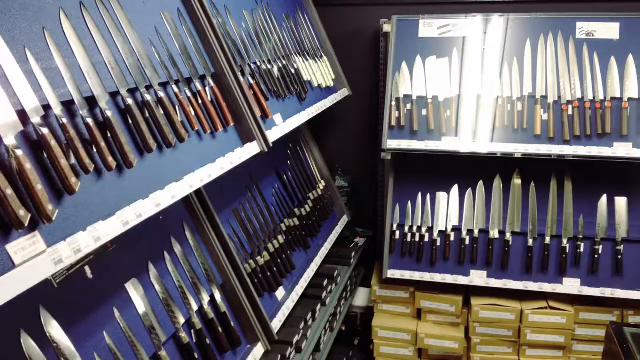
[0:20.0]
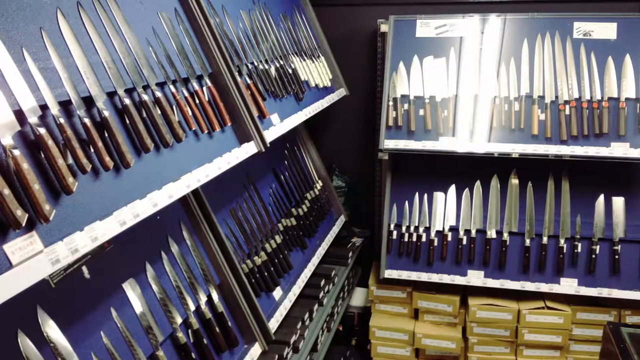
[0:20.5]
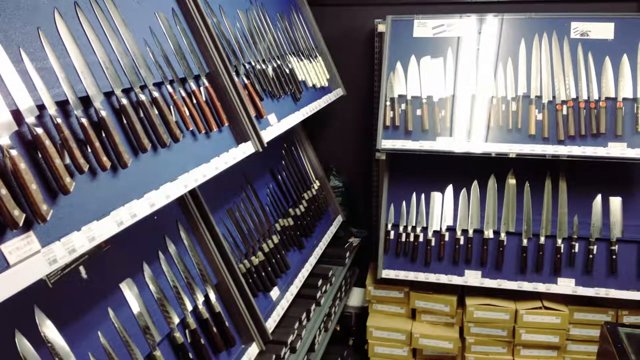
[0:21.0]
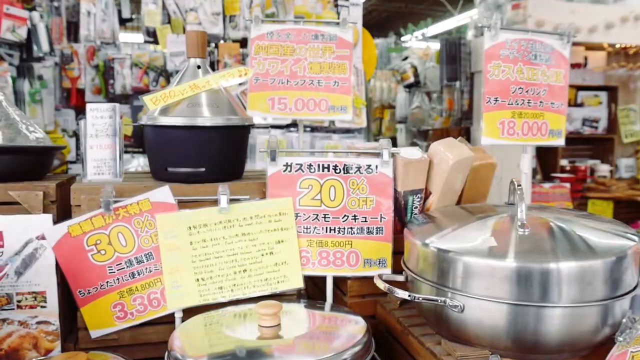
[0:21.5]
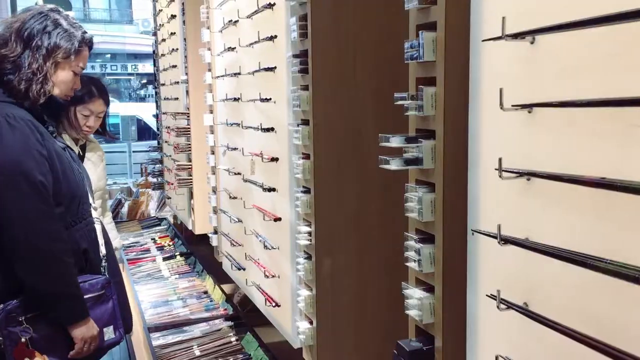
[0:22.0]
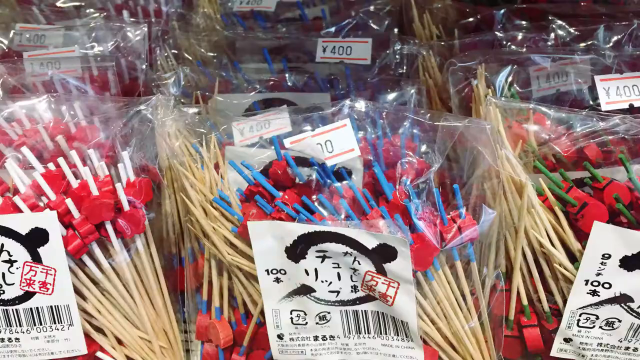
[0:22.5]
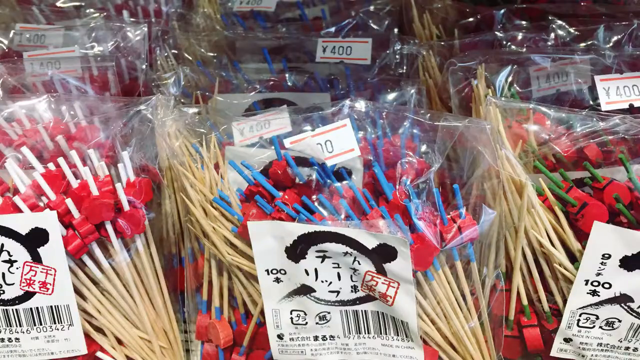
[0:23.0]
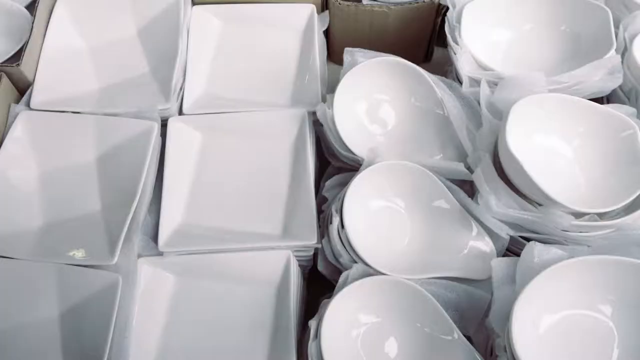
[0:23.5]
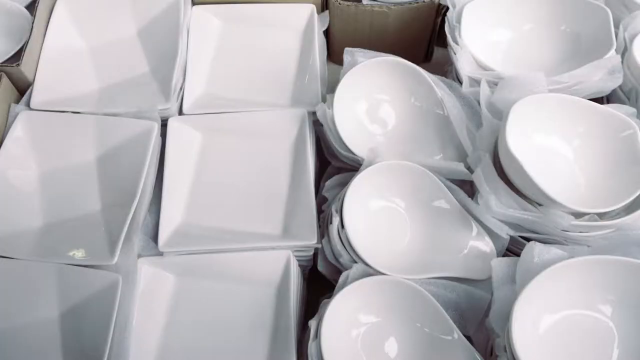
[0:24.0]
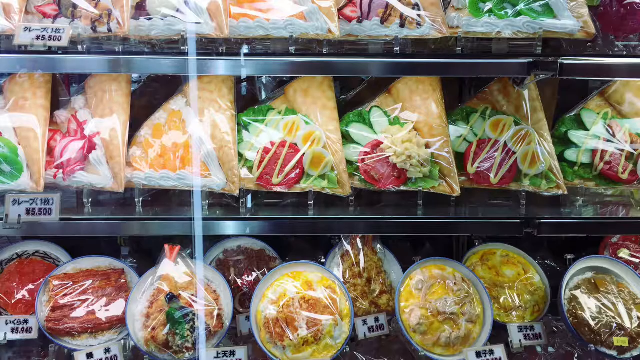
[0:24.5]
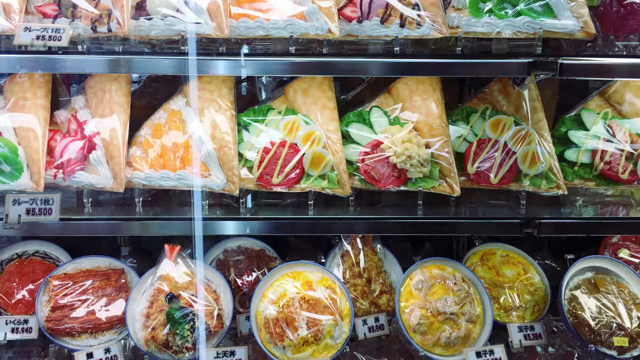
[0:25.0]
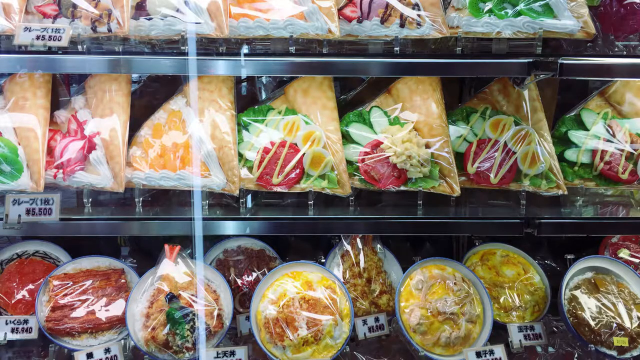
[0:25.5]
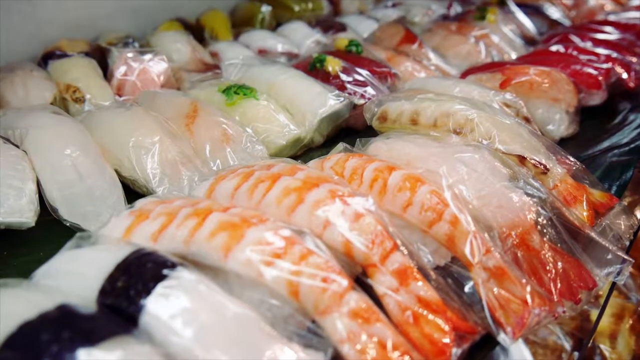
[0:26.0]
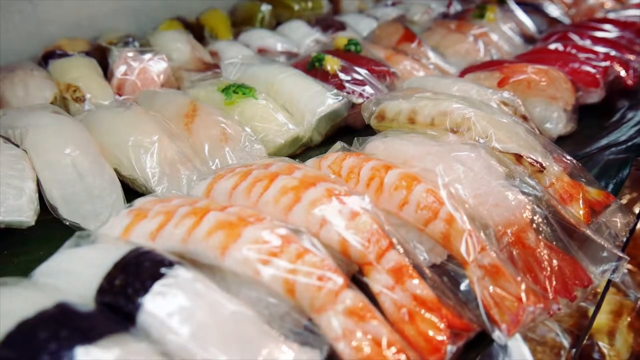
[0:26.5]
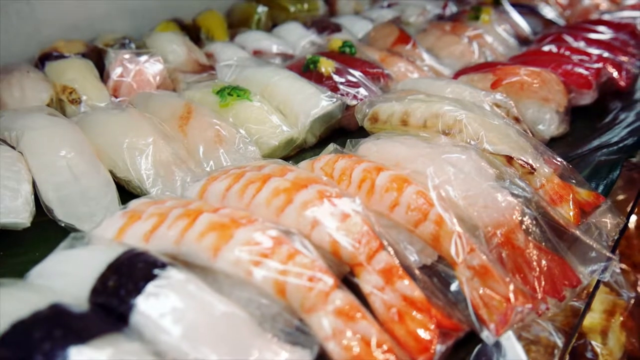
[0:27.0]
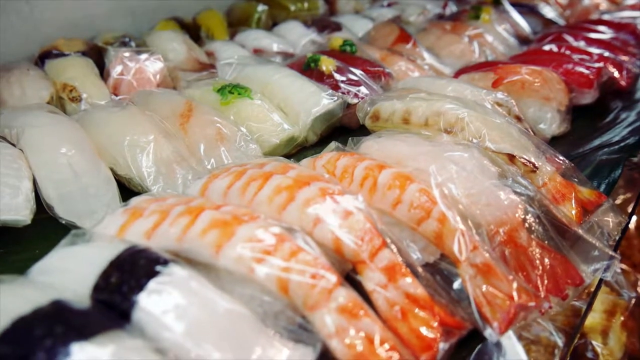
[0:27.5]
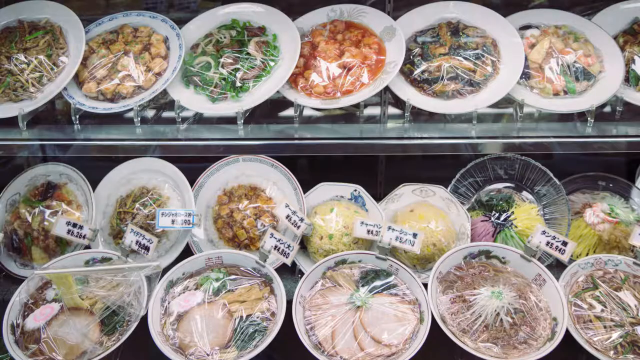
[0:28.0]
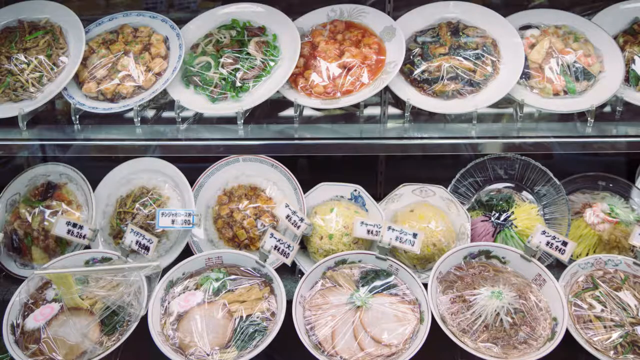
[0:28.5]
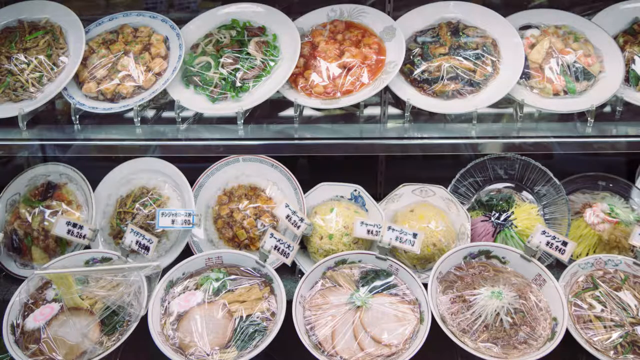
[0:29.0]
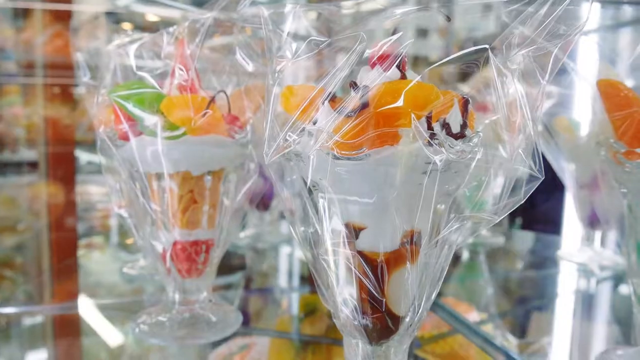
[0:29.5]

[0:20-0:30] Knives of all shapes are displayed, from the big ones to the thinnest ones. Their handles are black and brown, and the cutting part is shining steel. They are displayed in shelves or frames against a blue background. Among the house accessories is a silver pot with a 20% offer, with prices in the background. Another pot is black, with a 30% discount. Prices of 15,000, 18,000, 6,880 and 3,360 are visible. Women shop for the accessories. There are sticks with a red rubber piece at the top and others with blue at the top. The plates are white, and the pot for soup or porridge is also white. Another display holds packaged things that look like things to eat, some like fruits, all packed. Fish are packed in colorless paper; some of the fish are orange and white, others pure white. Other dishes are served on plates, covered with nylon paper and displayed.